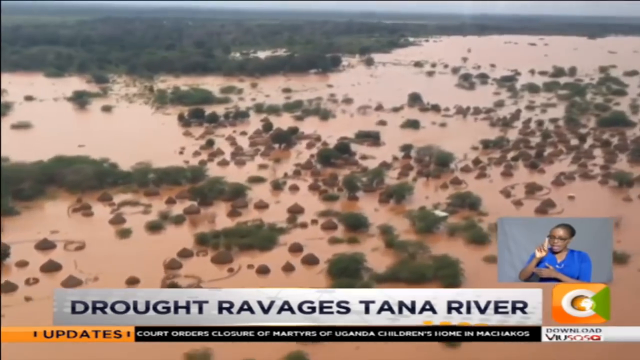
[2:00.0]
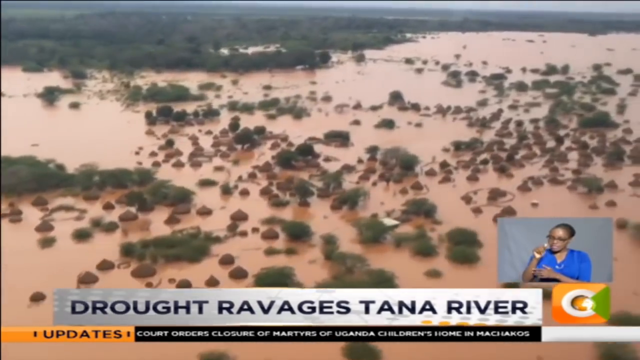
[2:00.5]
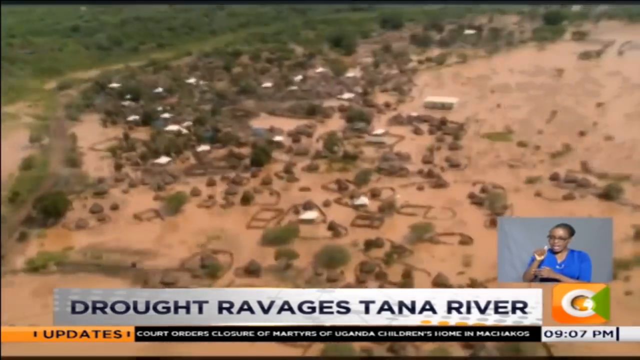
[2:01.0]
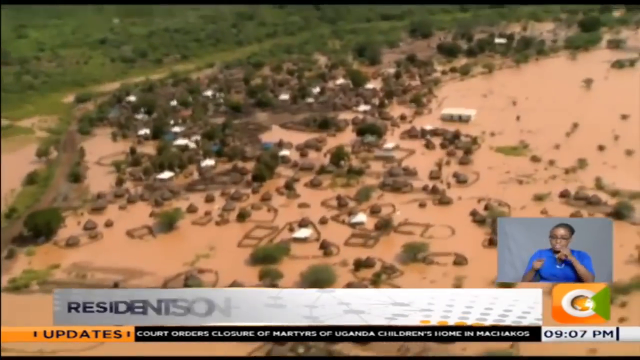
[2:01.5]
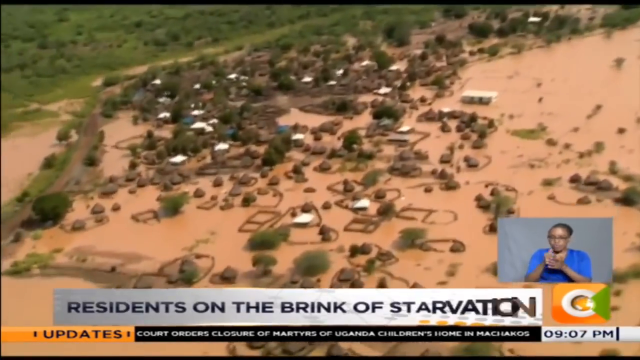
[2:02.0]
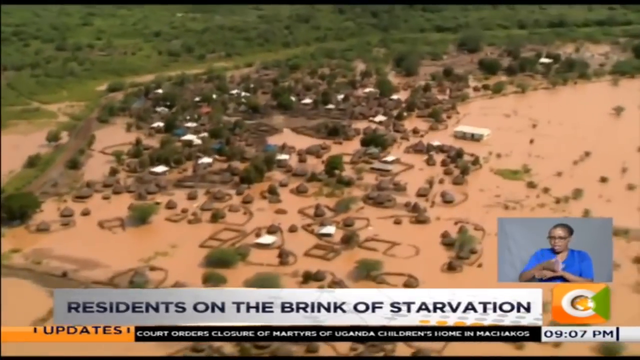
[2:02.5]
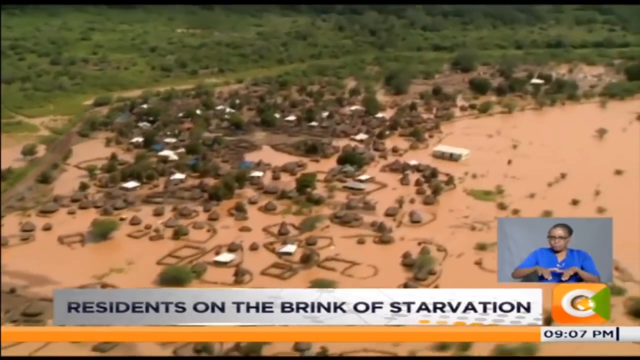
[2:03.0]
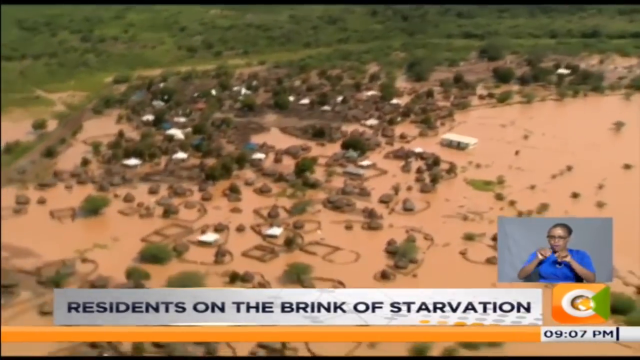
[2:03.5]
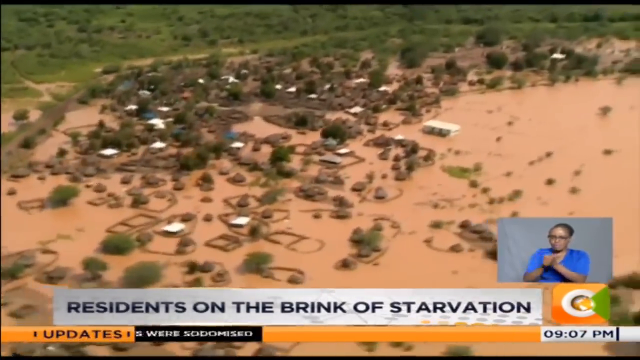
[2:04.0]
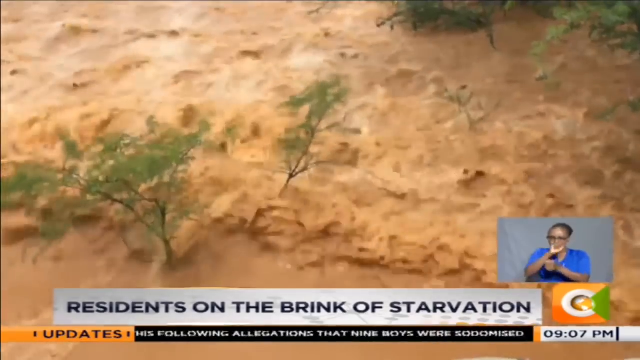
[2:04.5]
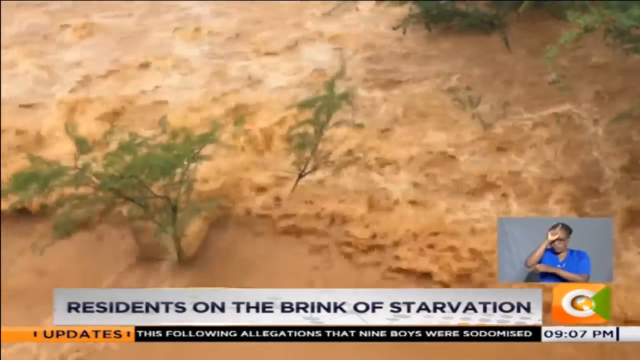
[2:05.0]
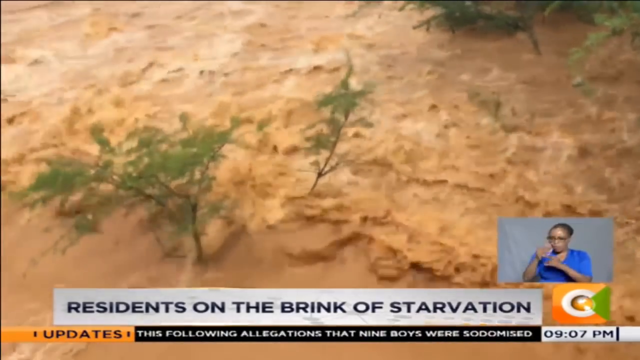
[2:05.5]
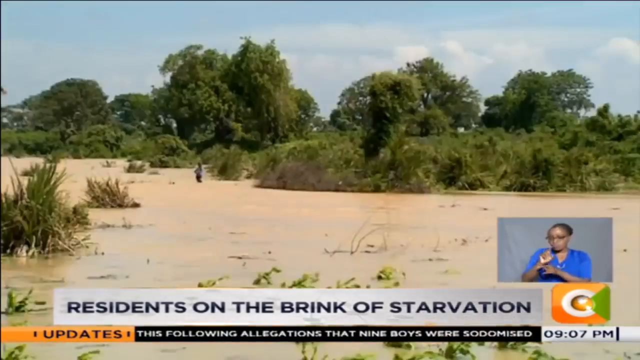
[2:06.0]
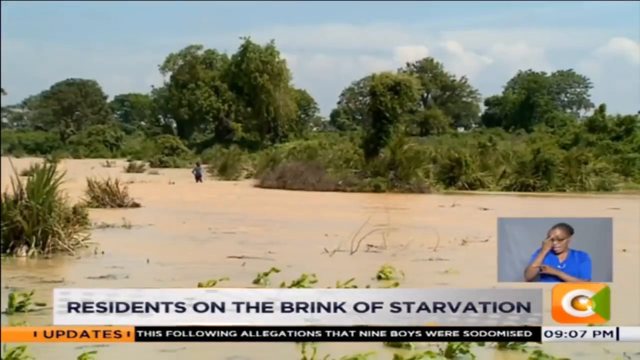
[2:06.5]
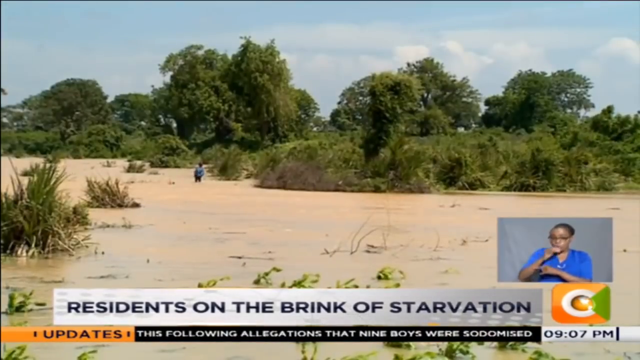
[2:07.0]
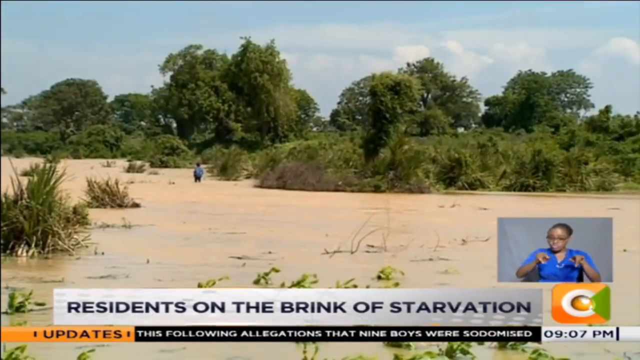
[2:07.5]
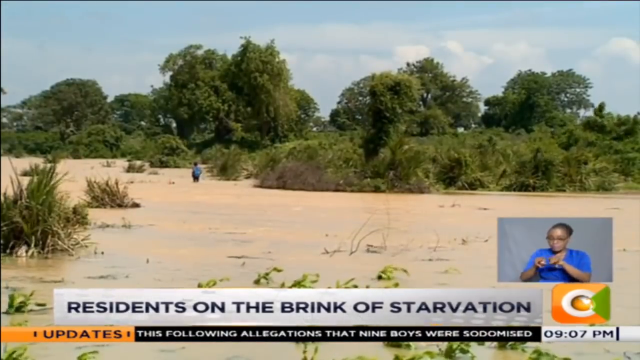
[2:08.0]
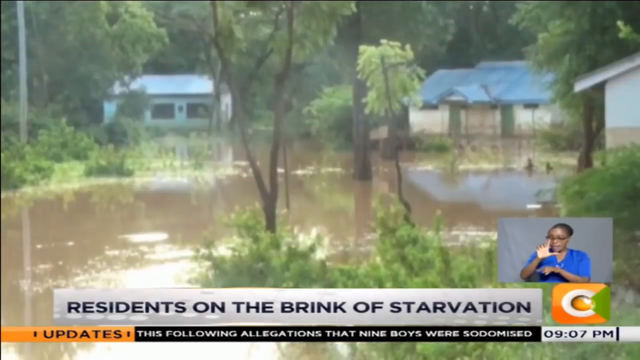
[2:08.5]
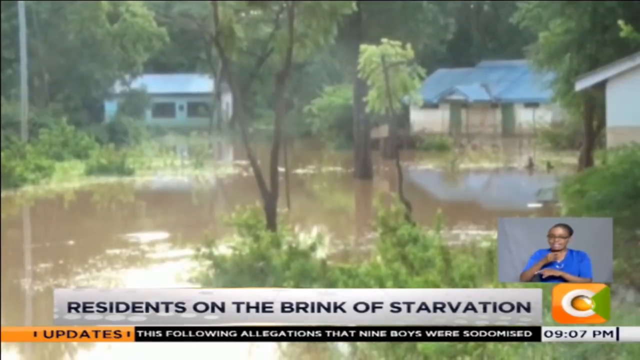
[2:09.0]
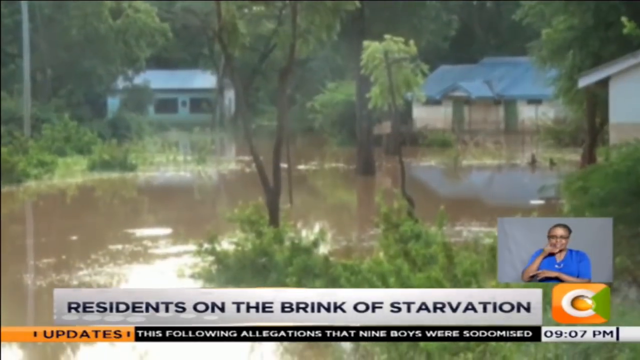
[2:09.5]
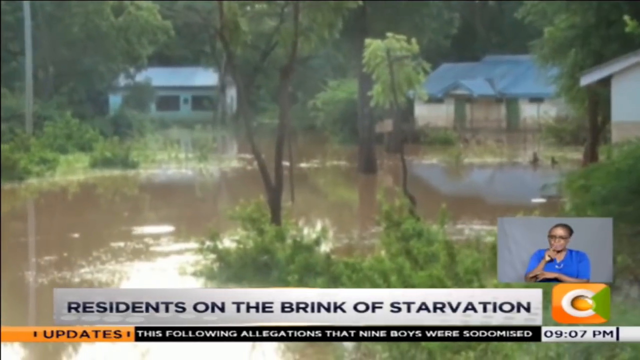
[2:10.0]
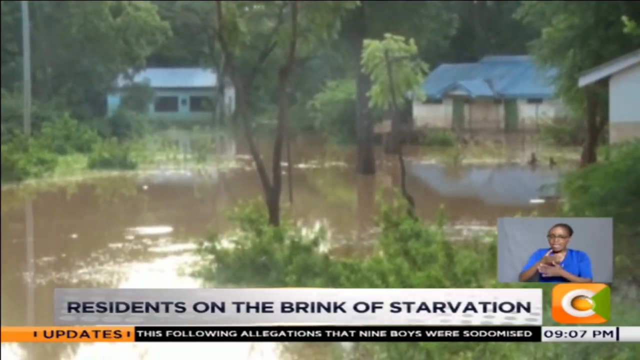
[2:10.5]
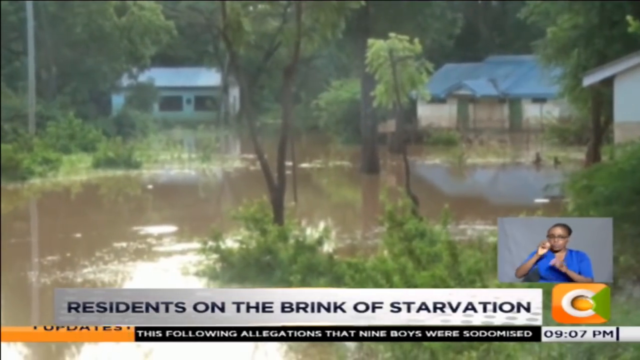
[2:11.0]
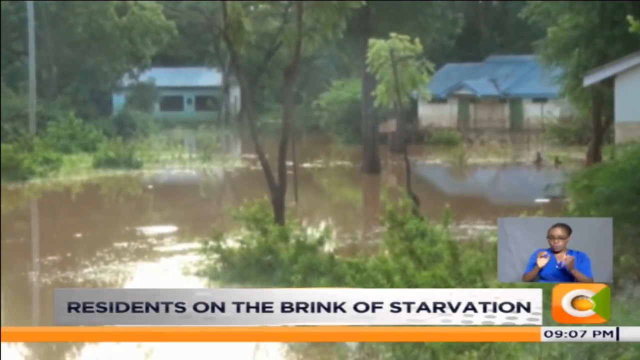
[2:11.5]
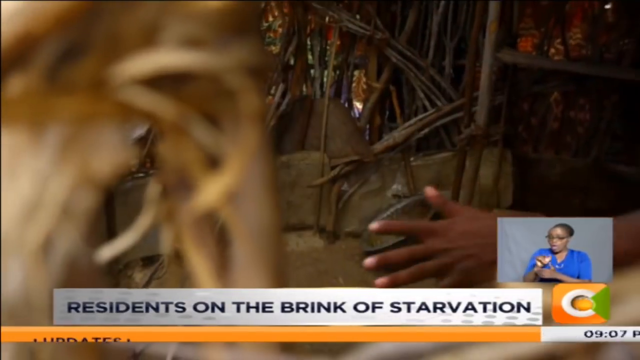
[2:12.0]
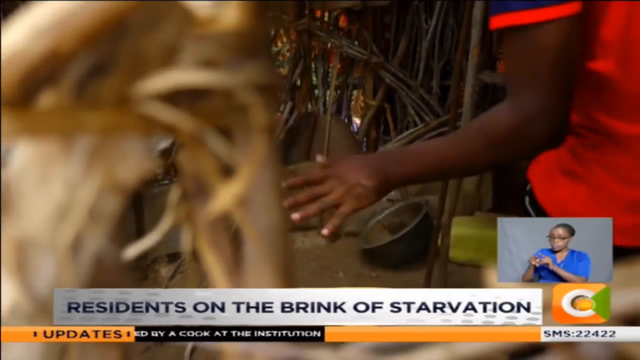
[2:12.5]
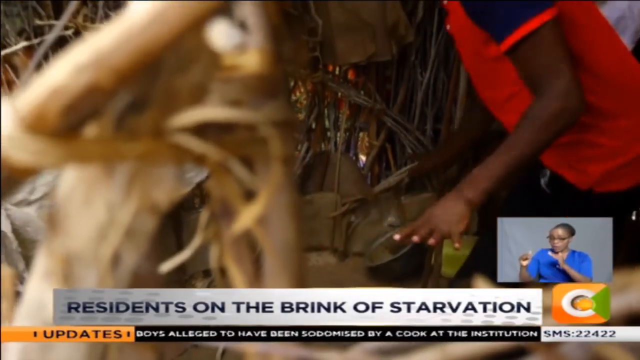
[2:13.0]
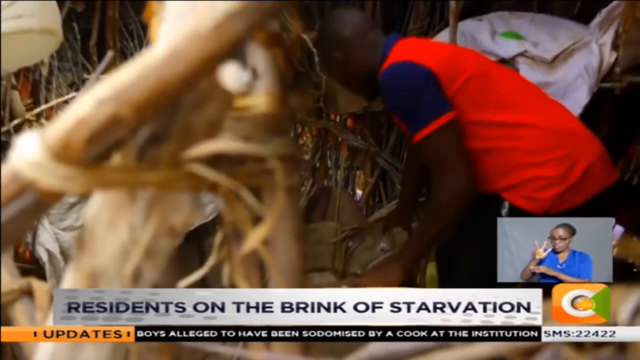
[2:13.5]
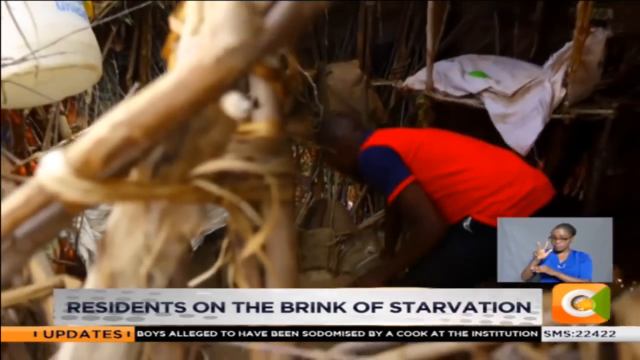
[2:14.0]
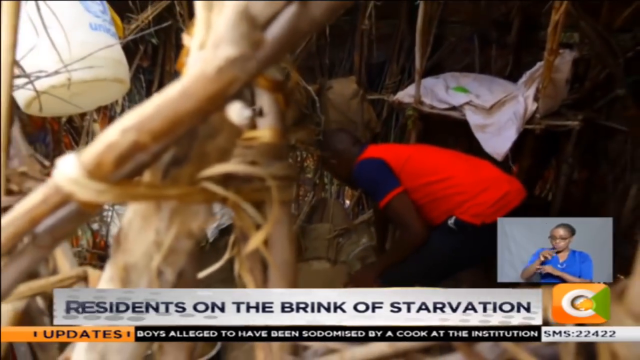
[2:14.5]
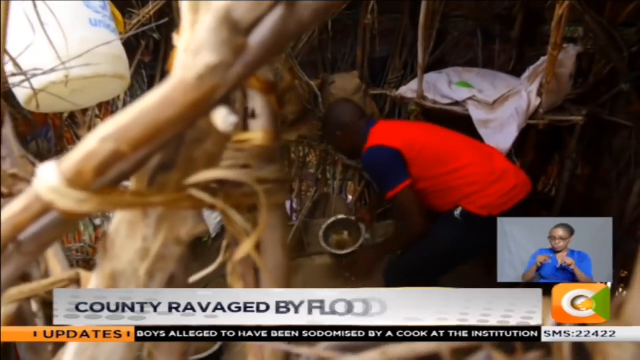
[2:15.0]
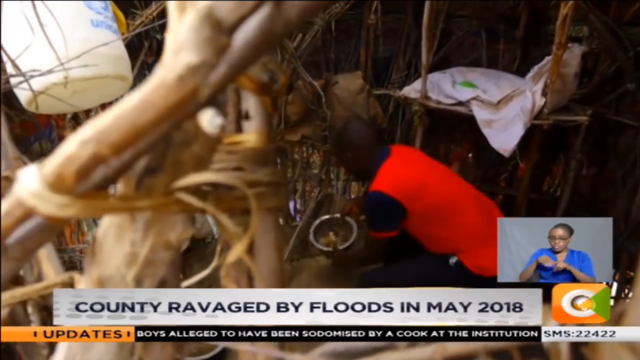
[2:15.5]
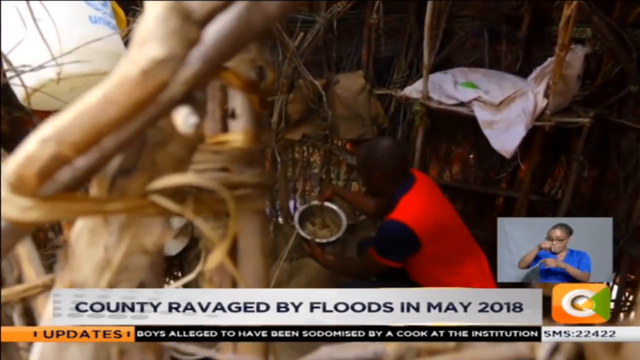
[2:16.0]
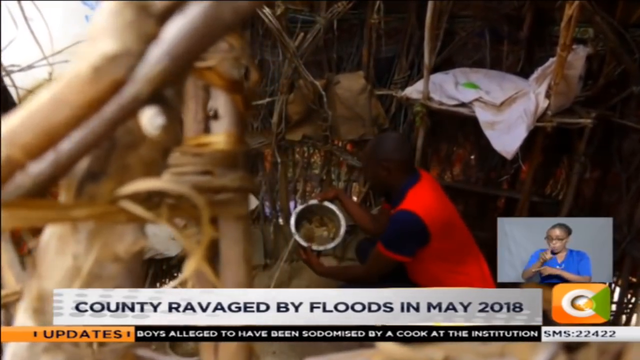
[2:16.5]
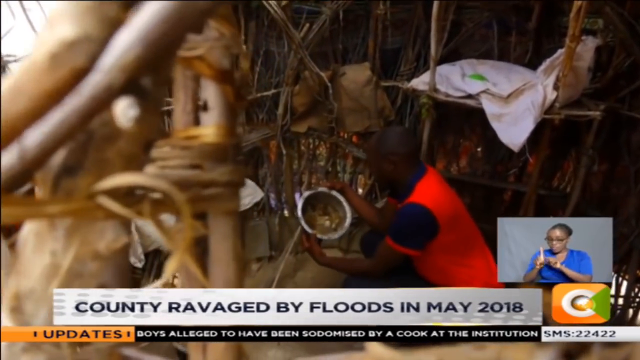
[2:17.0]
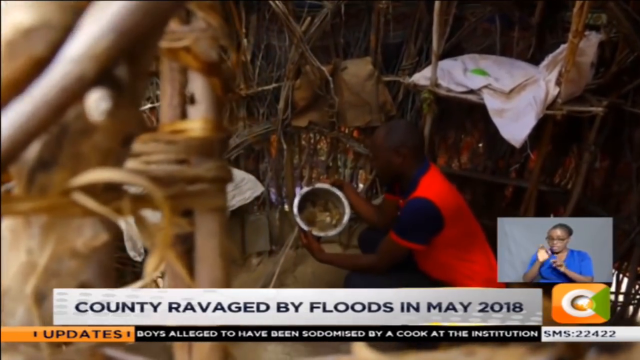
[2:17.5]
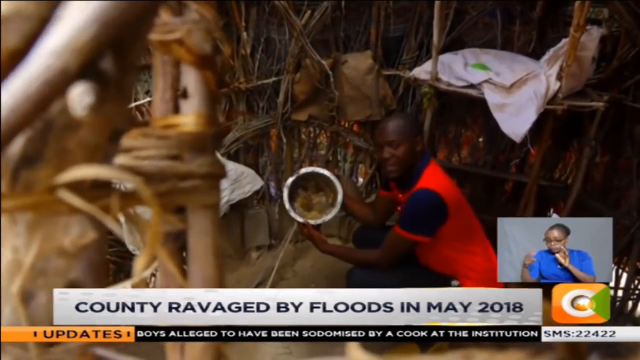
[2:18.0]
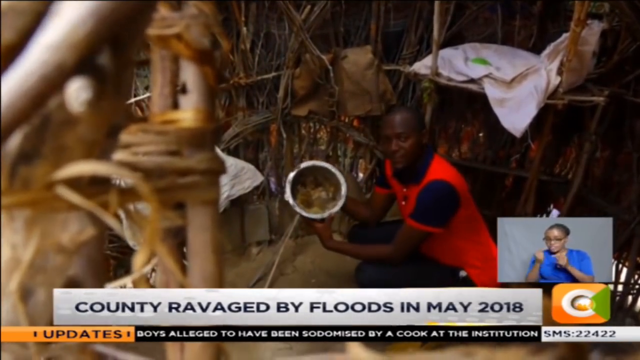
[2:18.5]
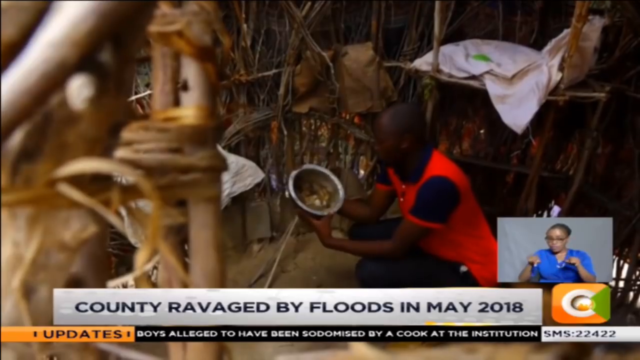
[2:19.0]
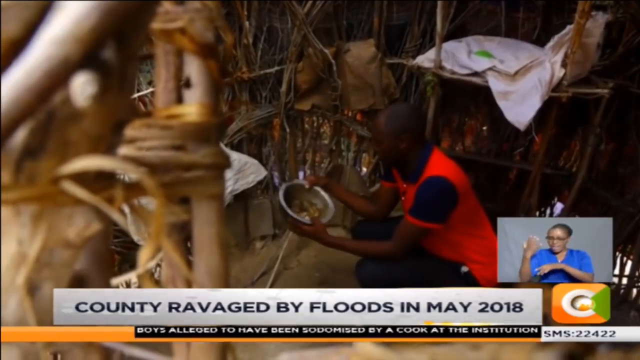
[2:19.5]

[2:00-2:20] A helicopter view shows the floods from above, followed by various first-person views from below of what the floods had looked like before. At the very bottom, text reads "residents on the brink of starvation" and "county ravaged by floods in May 2018", in black lettering on a white rectangle. The sign language interpreter is still signing down below. At the end, a possible resident of the area, wearing a red shirt, shows off a bowl and part of their house, looking upset, as if something is gone or missing or things are scattered, possibly showing the destruction. A logo at the very bottom is a white O on an orange background with a green, somewhat triangular object to its right. Updates run along the bottom, and the universal time appears in the bottom right.